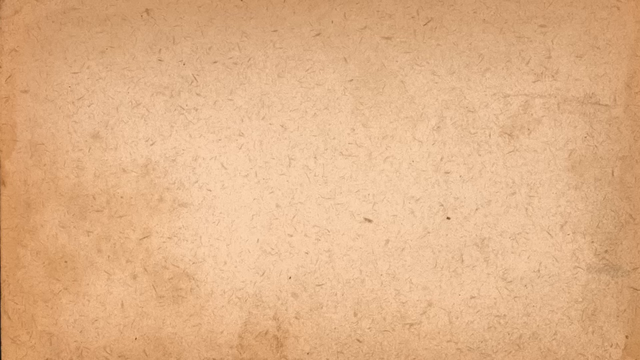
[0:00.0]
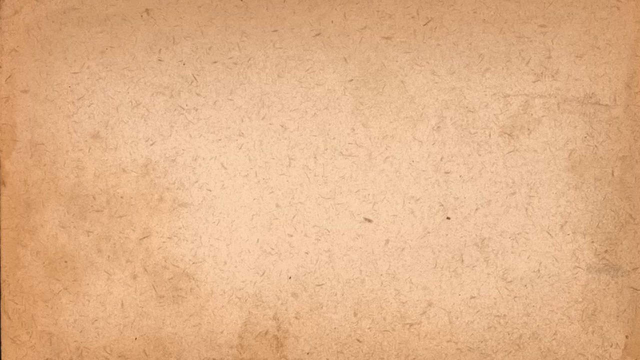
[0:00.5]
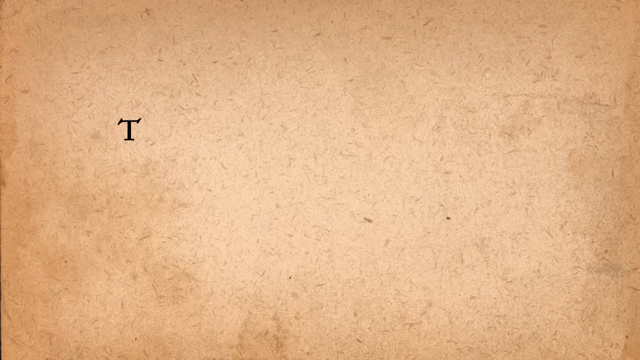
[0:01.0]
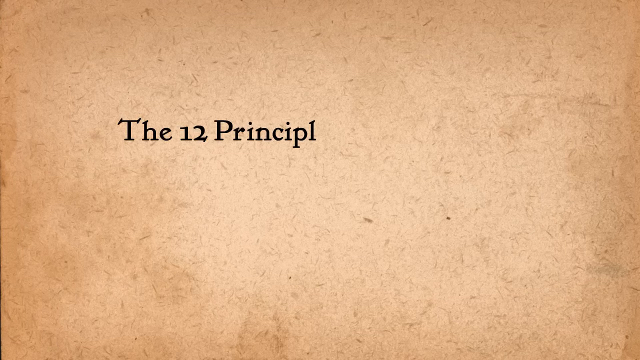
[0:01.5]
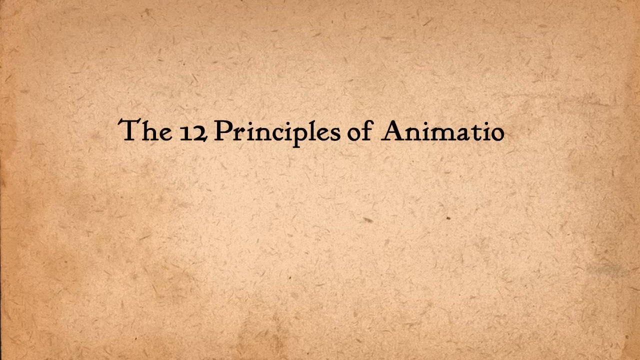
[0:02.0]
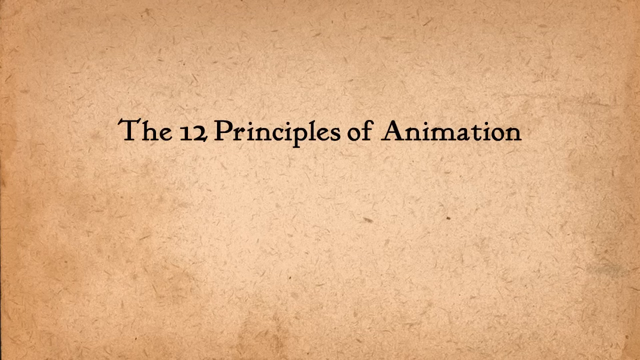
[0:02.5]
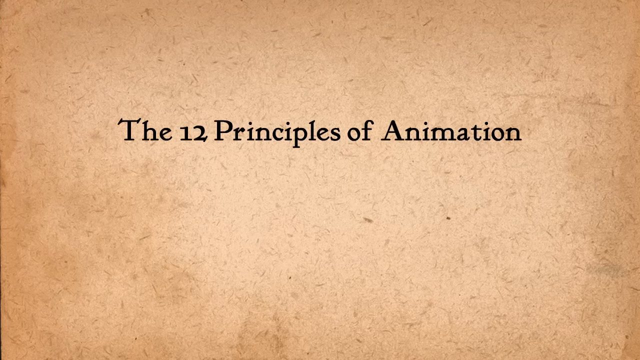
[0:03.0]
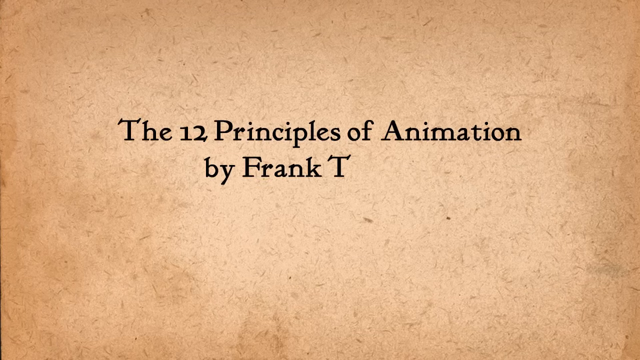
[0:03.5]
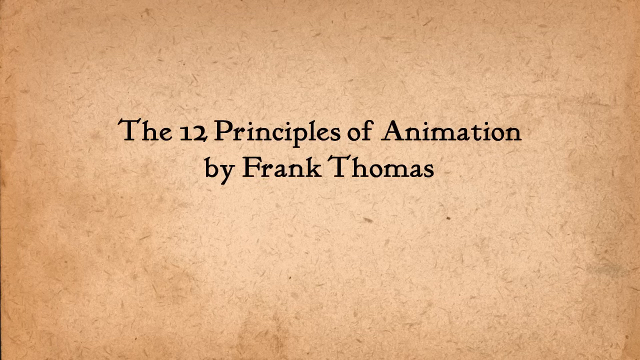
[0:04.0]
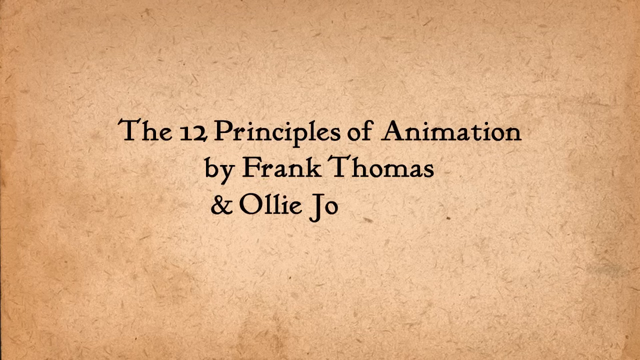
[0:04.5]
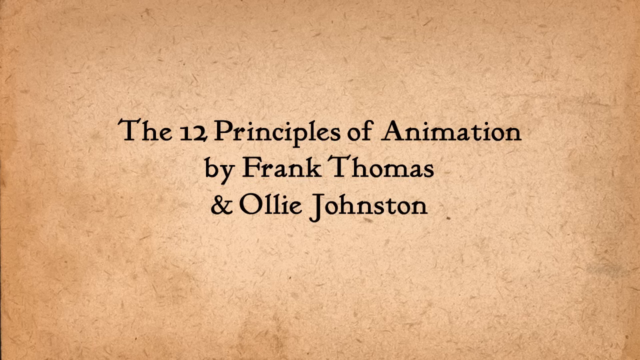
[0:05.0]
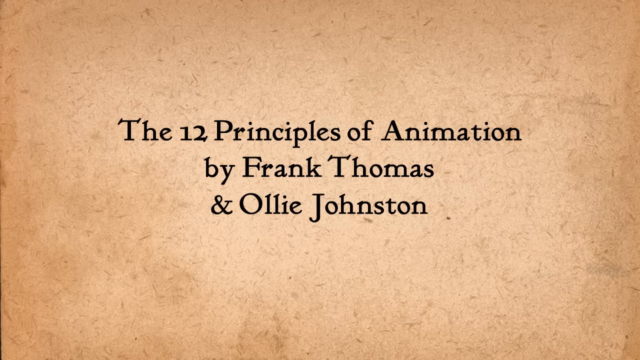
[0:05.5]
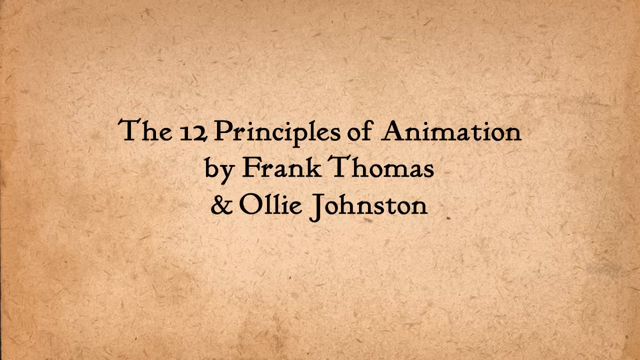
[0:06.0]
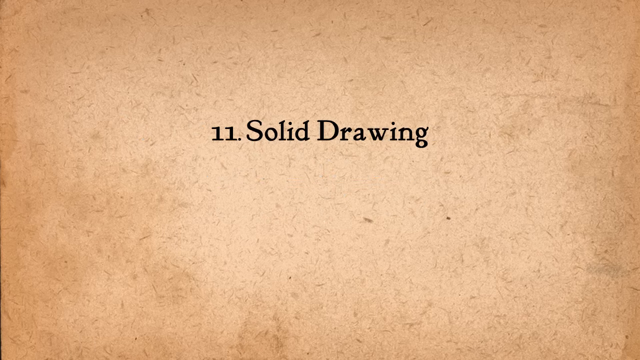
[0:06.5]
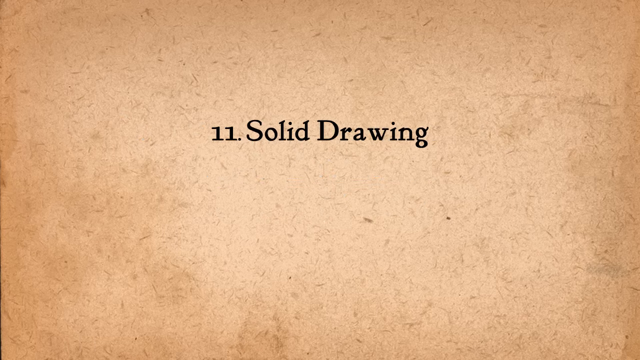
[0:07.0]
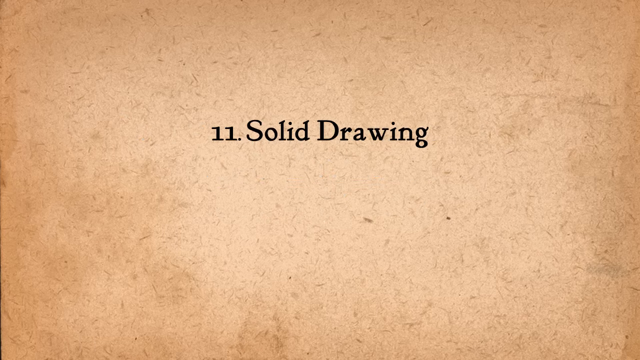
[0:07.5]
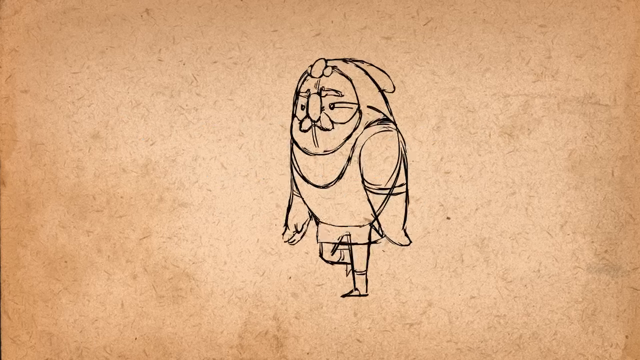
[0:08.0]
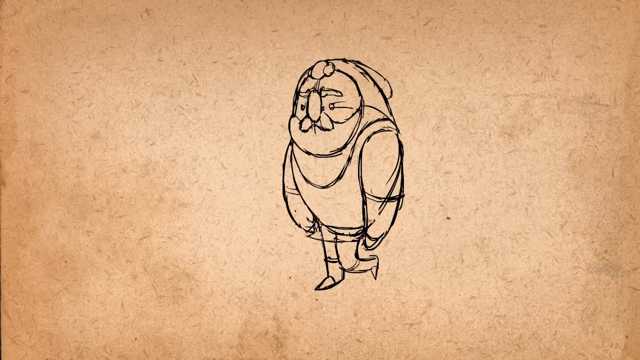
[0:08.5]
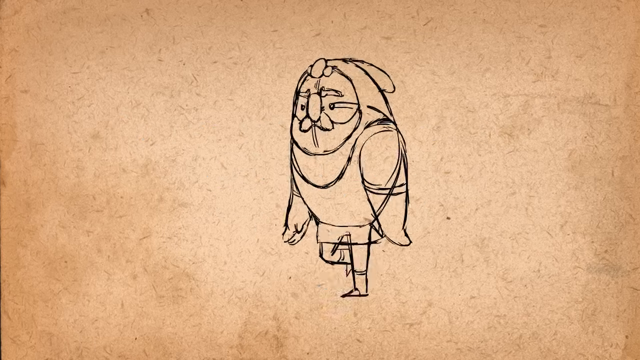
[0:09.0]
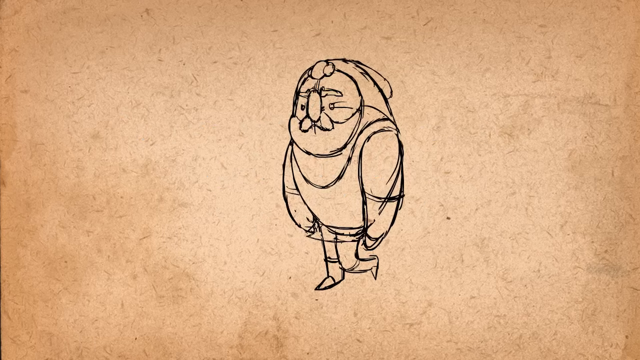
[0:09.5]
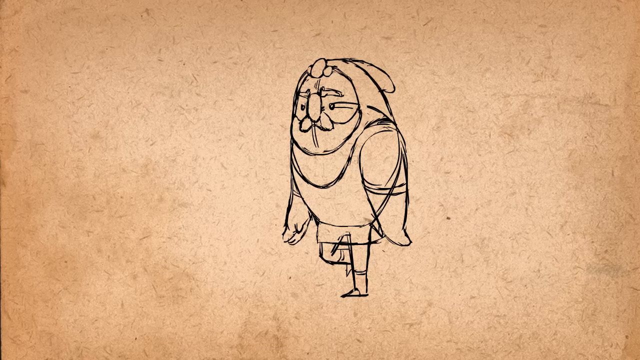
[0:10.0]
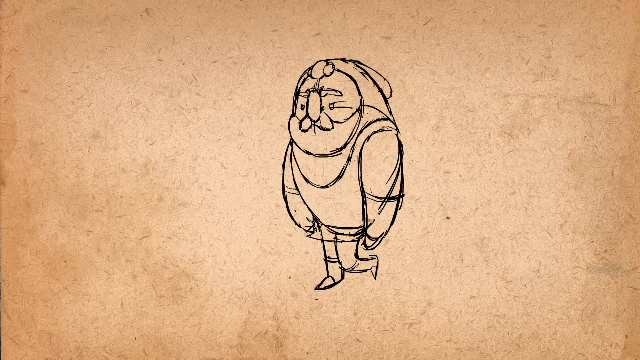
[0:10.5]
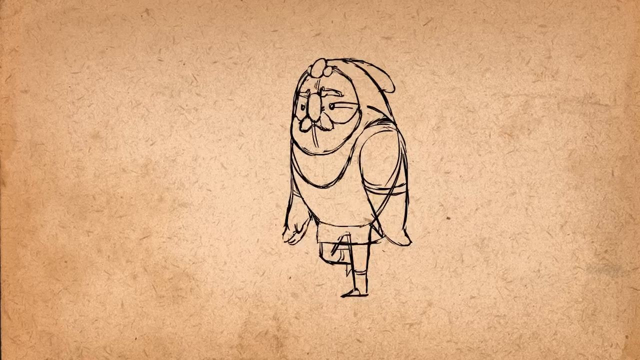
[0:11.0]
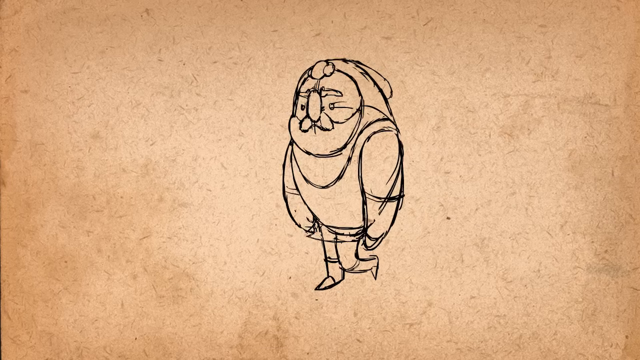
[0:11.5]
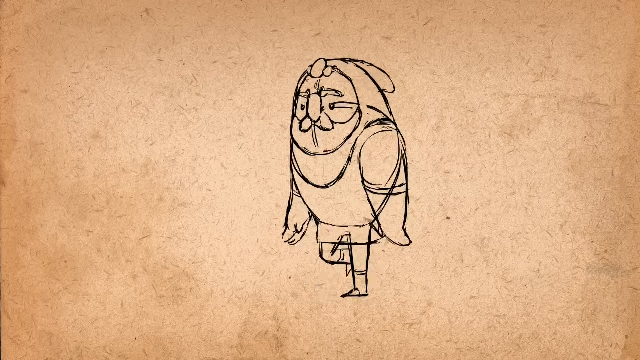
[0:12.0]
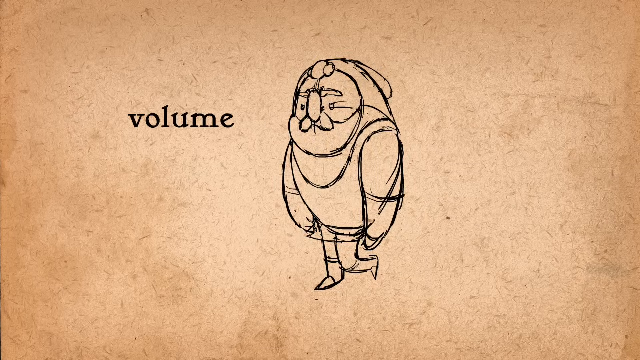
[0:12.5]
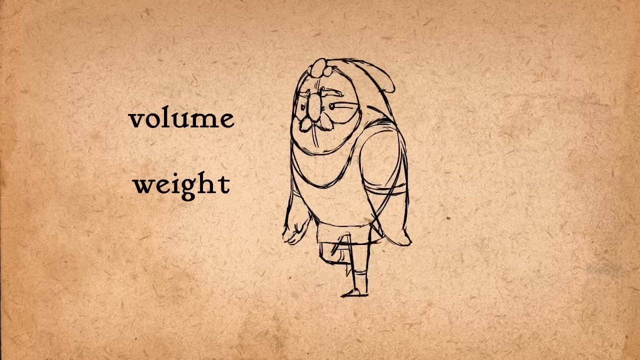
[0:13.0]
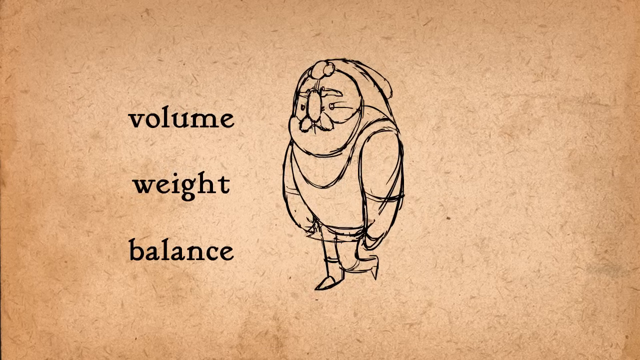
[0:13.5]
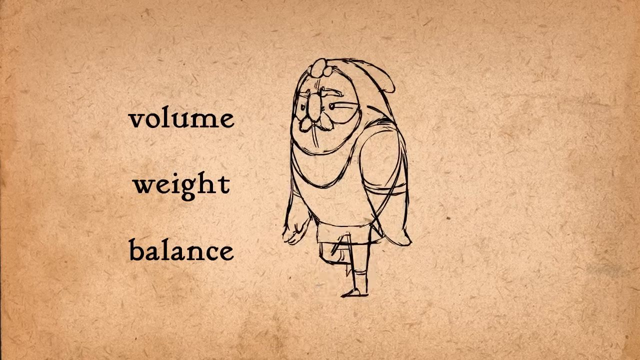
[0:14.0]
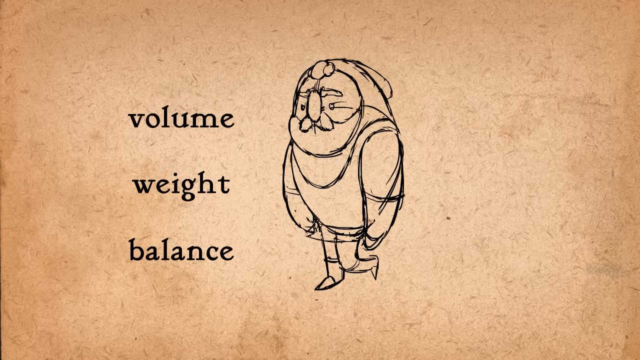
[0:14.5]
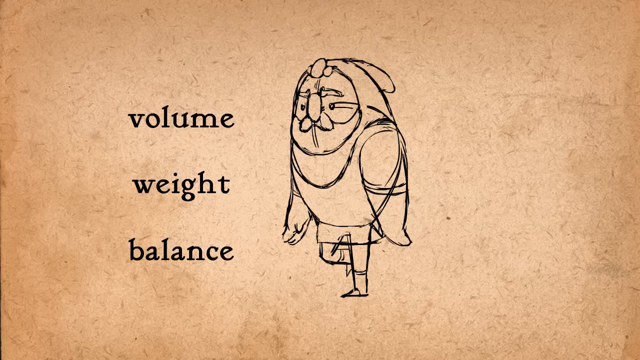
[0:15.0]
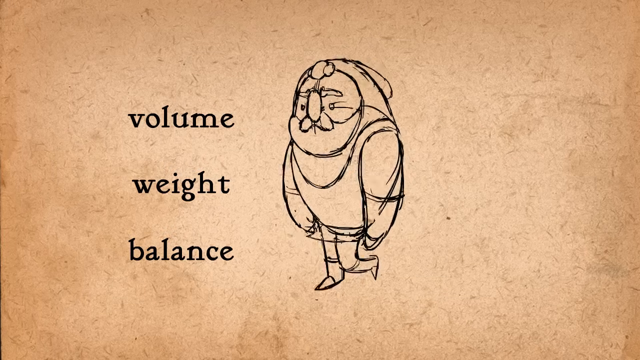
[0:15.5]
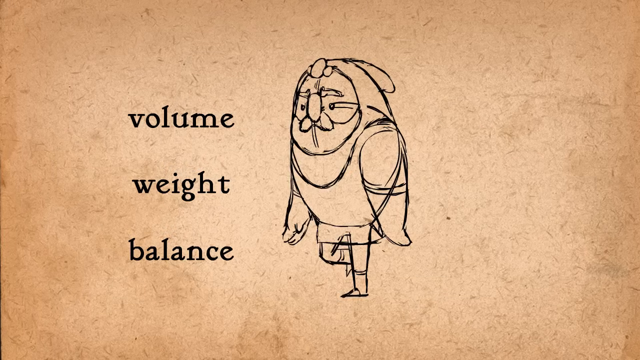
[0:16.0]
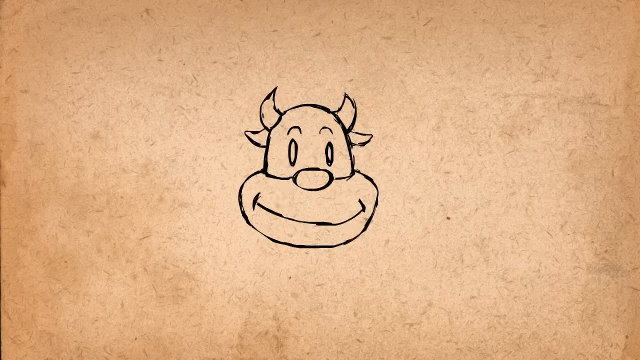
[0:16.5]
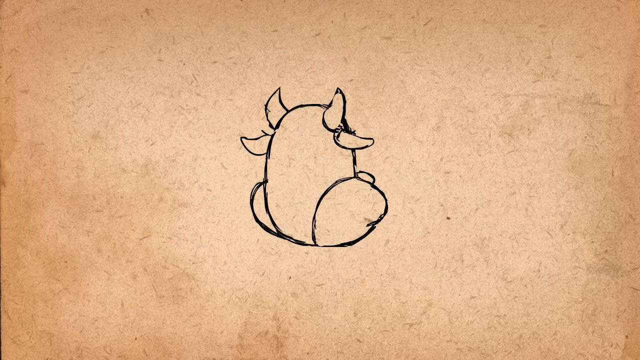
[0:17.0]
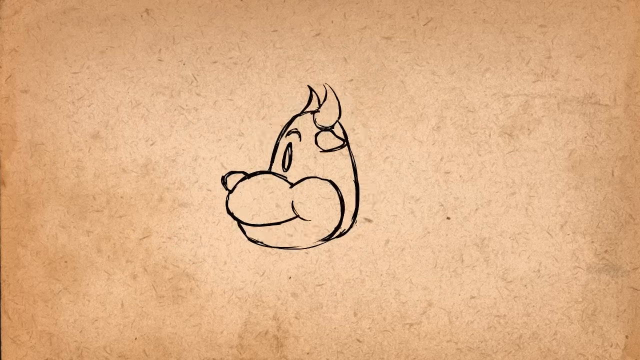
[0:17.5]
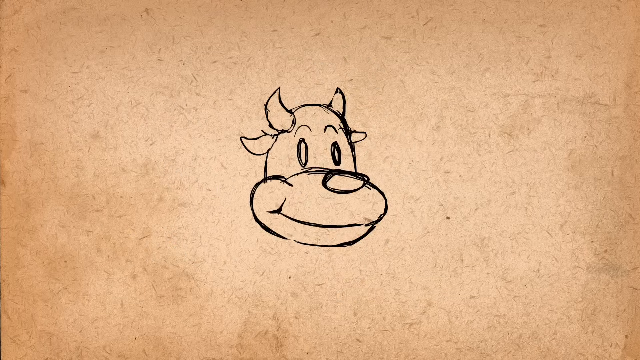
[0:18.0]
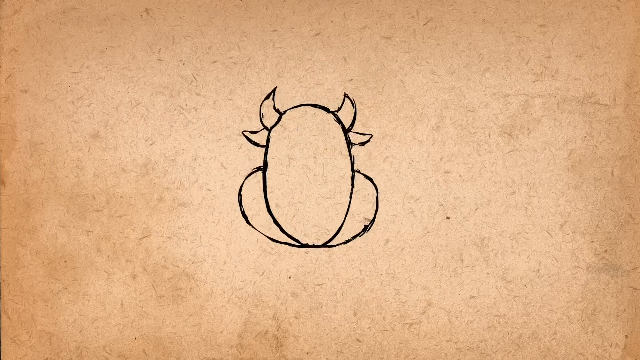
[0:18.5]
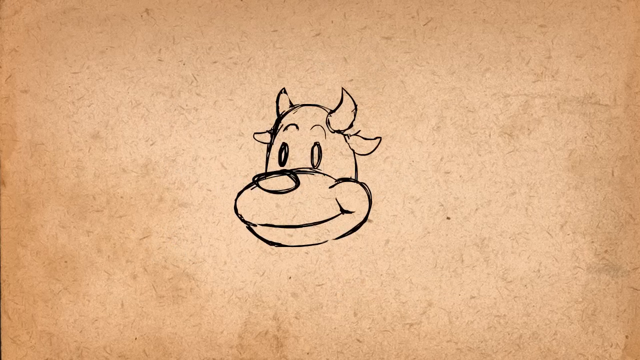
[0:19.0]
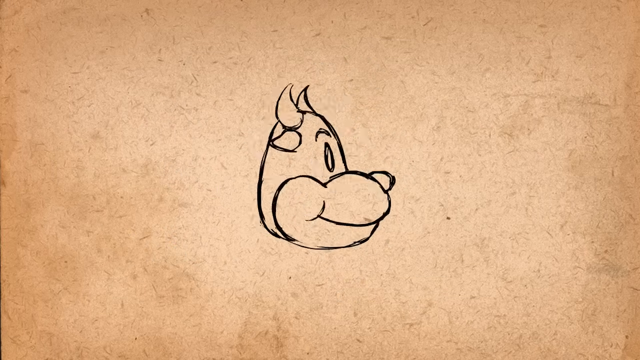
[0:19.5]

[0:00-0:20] Against a brown background, deep black letters read "The Twelve Principles of Animation by Frank Thomas and Ollie Johnson" and "Number 11, solid drawing." An animation follows of a bearded, mustached person with big eyebrows and a Santa-like hat, walking. To the viewer's left of the walking figure, in front of him, bold black letters read from top to bottom "volume," then "weight," then "balance." Next comes a smiling cow with little horns, ears that jut out, two eyes, a big smile and a nose. Only its head turns, 360 degrees, from the viewer's left to right.